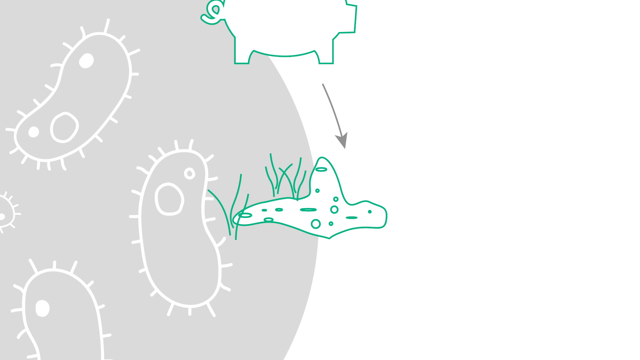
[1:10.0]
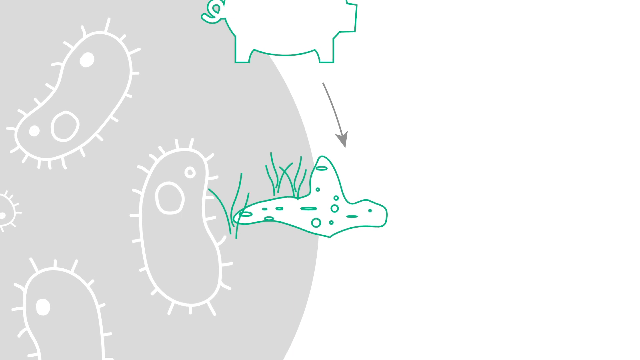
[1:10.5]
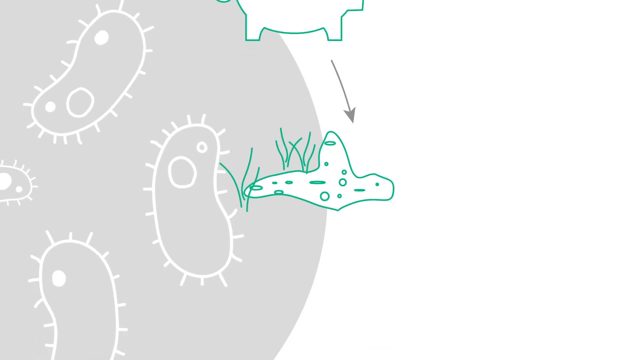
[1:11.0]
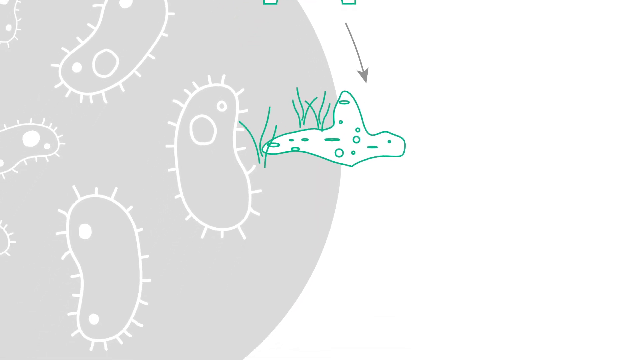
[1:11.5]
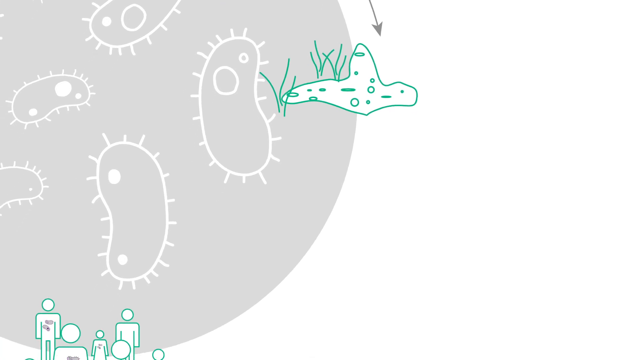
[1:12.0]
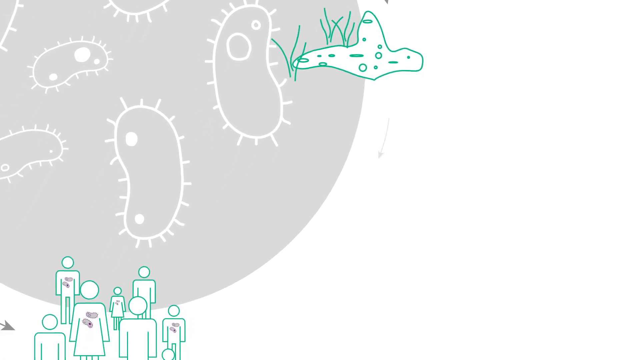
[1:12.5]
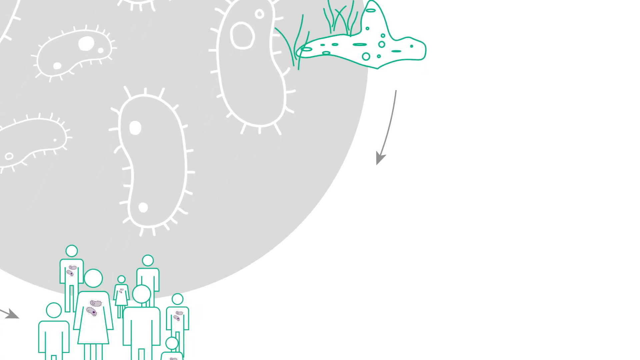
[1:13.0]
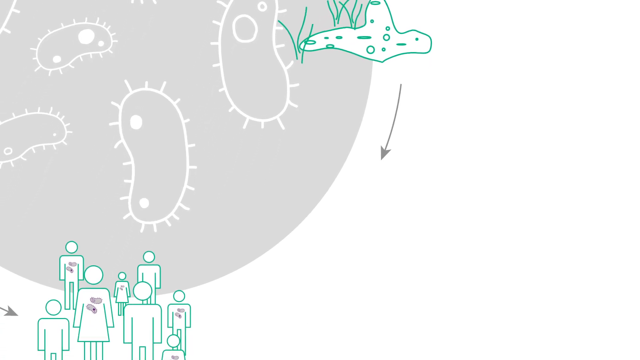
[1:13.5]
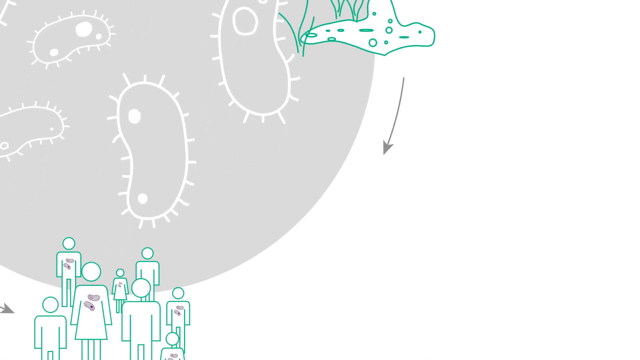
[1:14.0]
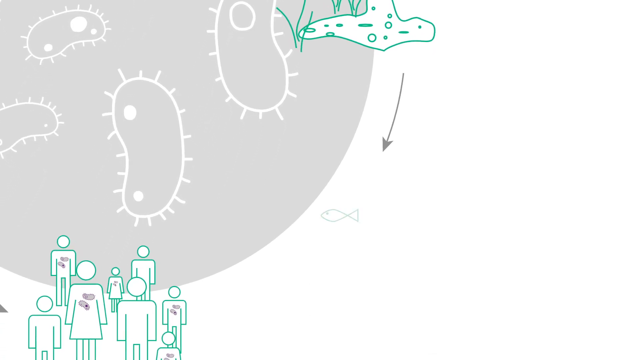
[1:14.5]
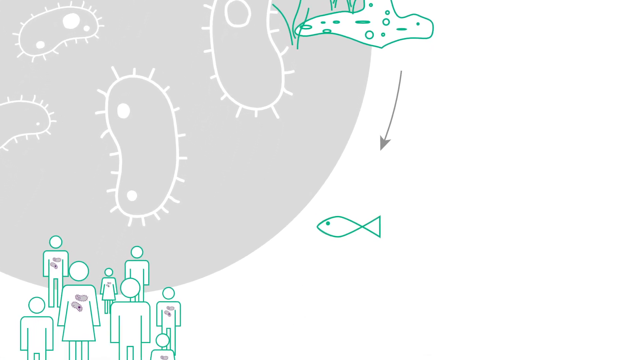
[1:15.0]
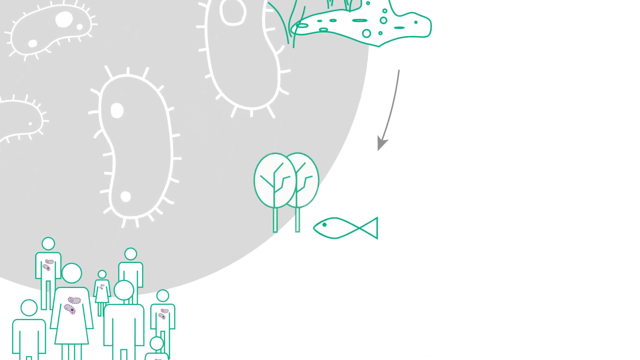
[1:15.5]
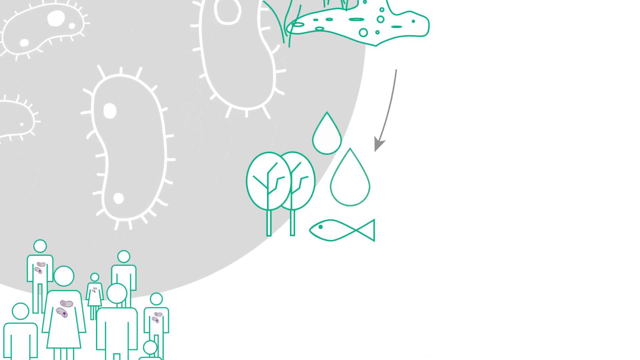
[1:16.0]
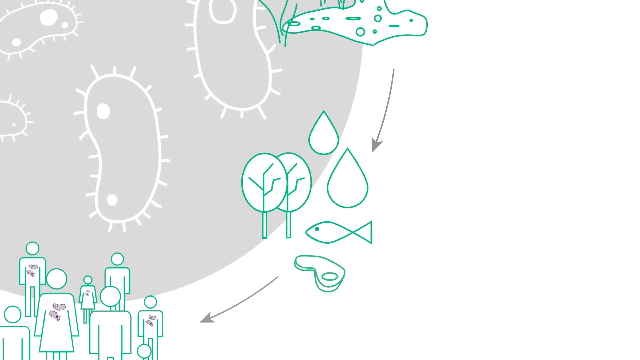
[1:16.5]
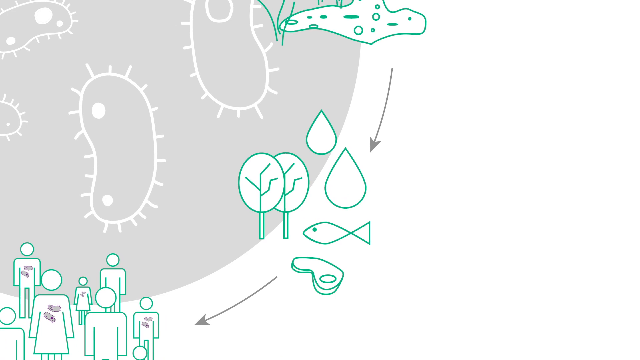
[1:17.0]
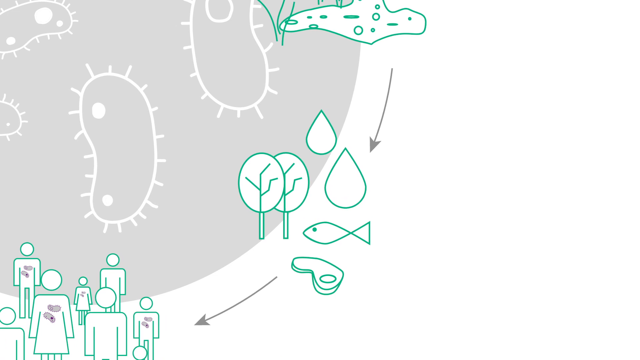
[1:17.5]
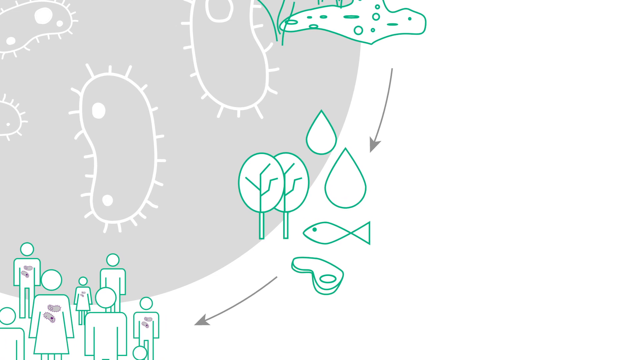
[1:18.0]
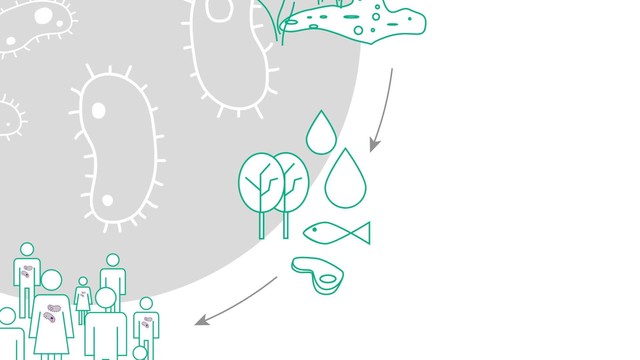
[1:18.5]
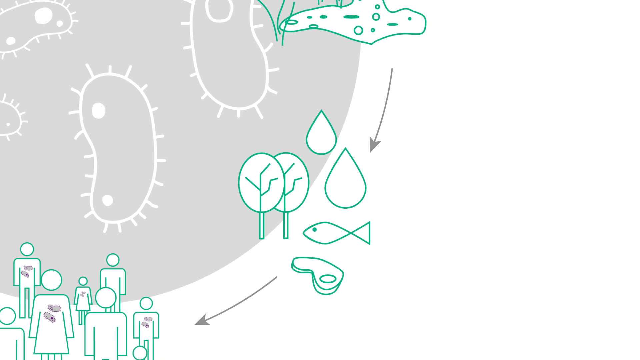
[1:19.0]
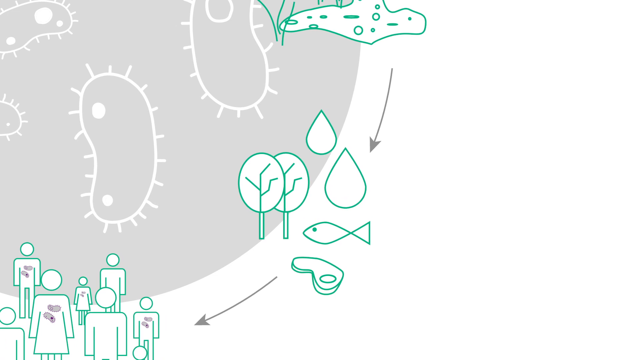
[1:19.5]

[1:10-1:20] The video forms some structures of an unidentified kind.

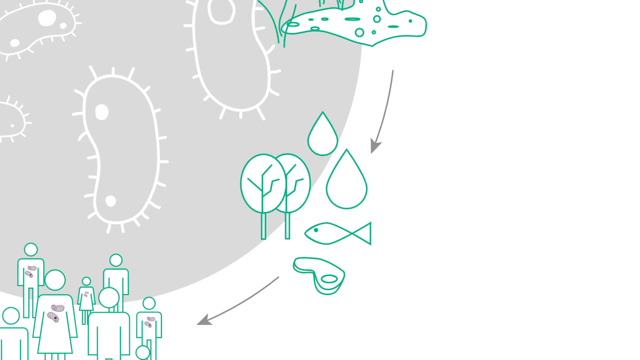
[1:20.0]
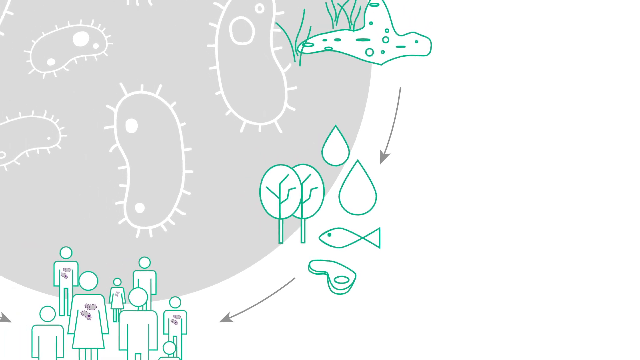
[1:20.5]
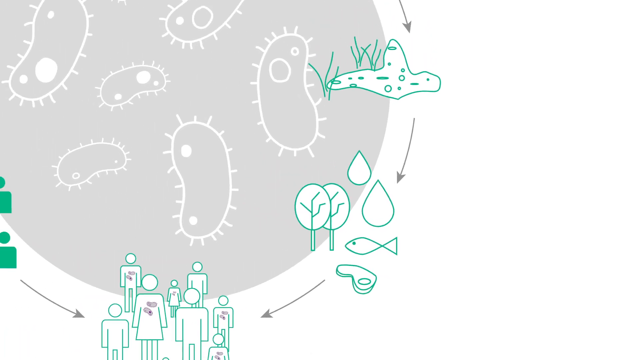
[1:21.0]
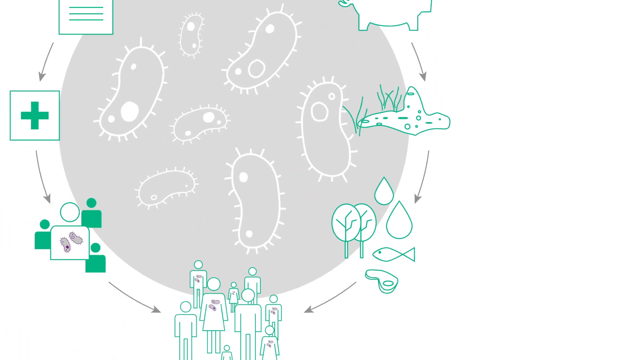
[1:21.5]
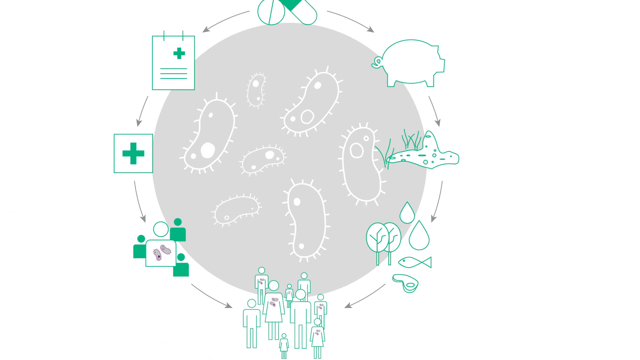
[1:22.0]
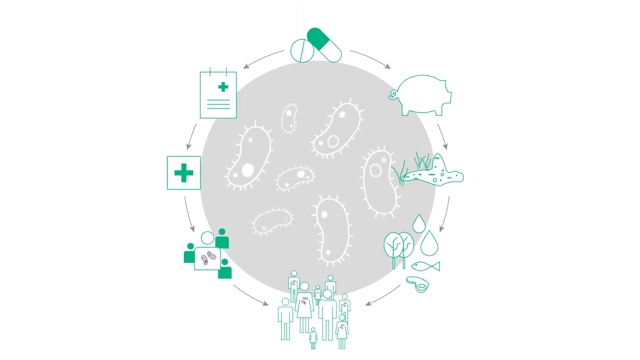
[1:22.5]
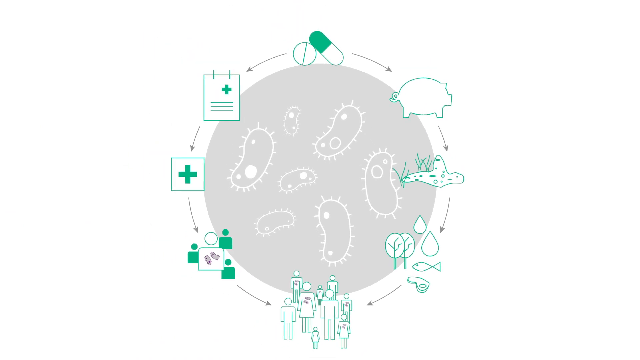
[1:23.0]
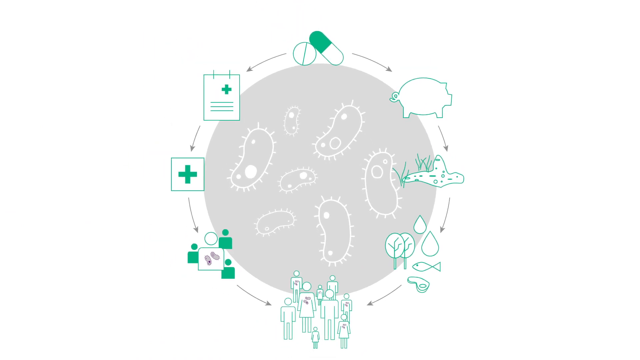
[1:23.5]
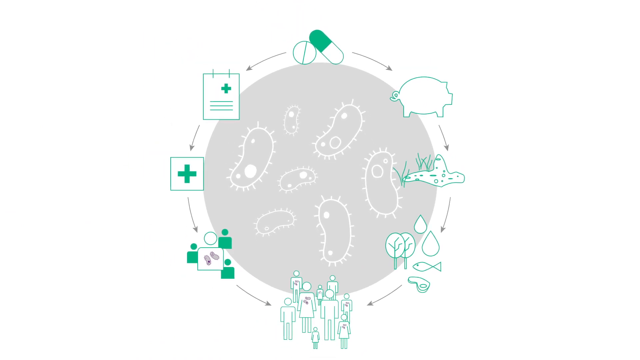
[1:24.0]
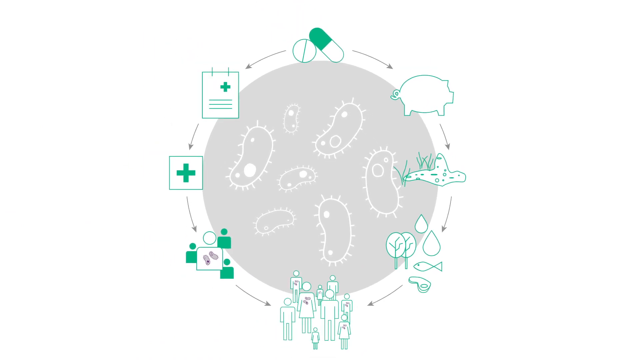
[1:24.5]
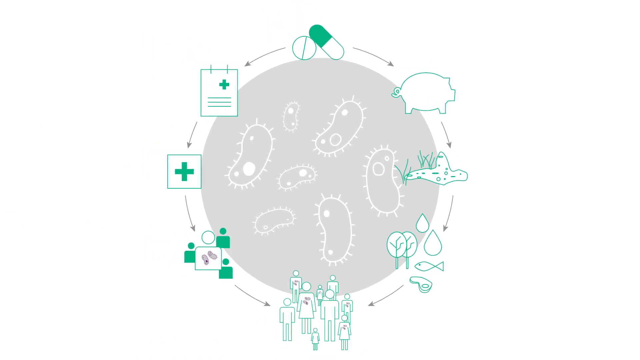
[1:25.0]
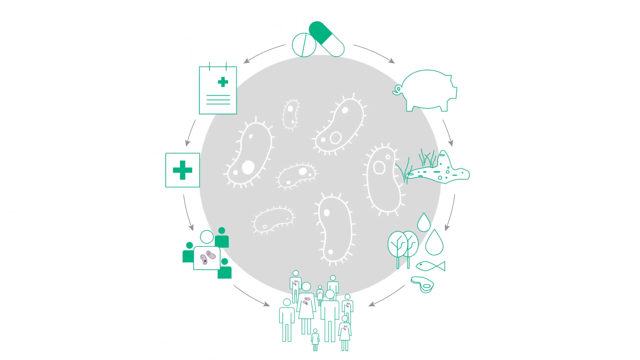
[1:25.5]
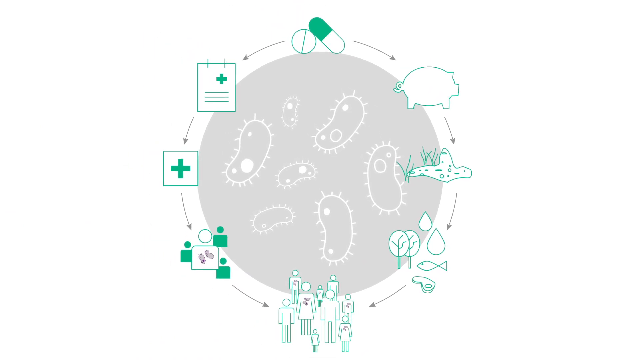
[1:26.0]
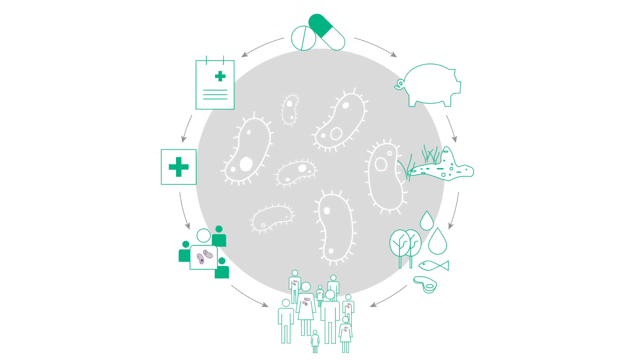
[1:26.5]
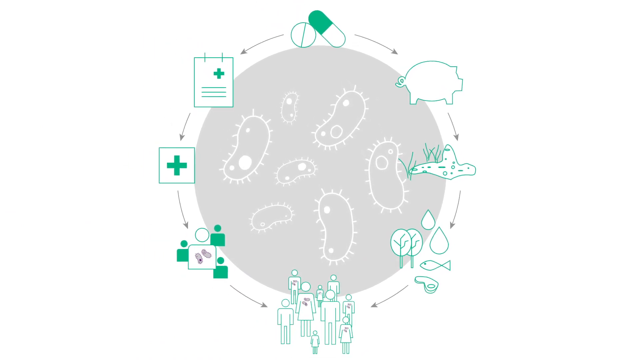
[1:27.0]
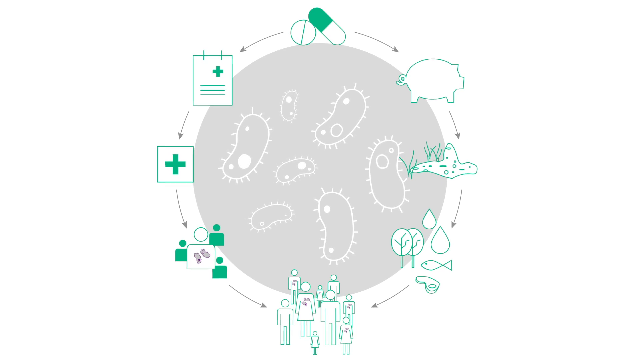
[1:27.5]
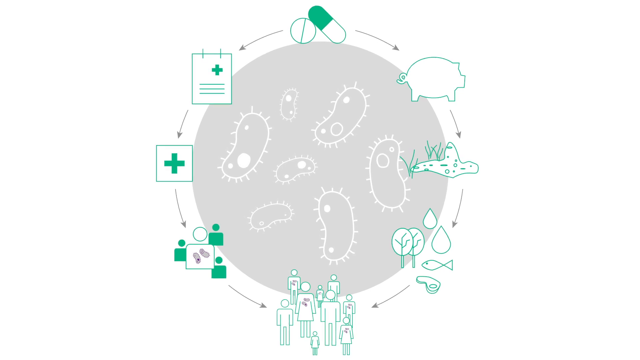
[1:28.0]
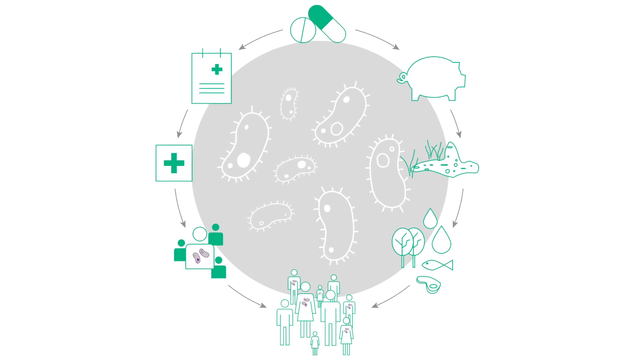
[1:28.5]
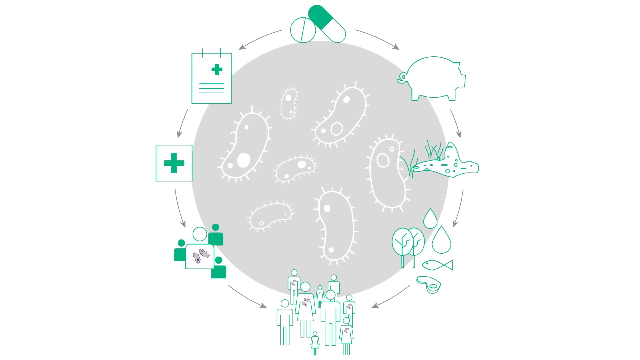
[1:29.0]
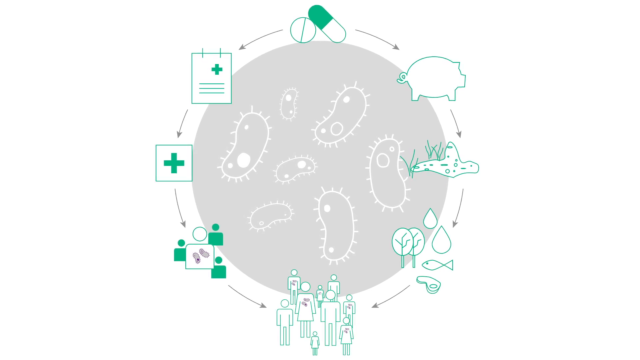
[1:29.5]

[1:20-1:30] A round shape forms one by one, with many things together in it.